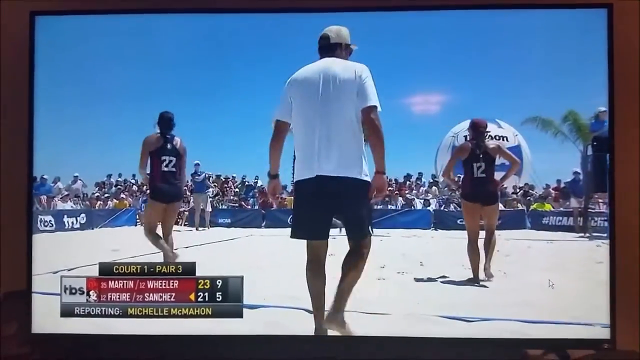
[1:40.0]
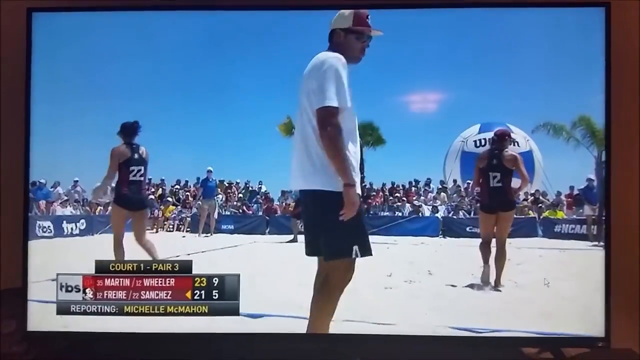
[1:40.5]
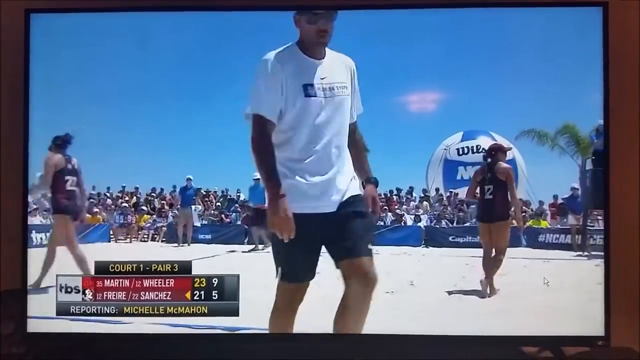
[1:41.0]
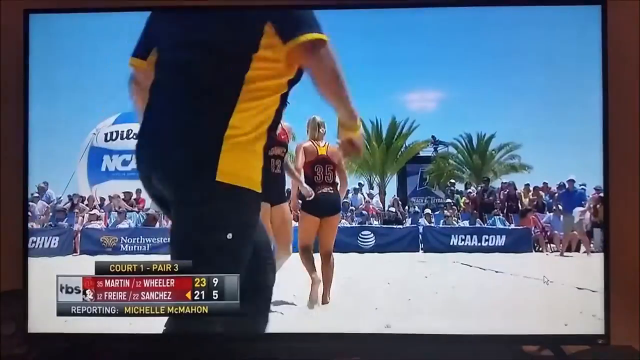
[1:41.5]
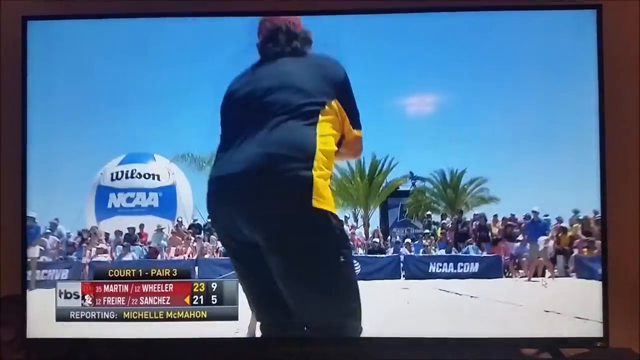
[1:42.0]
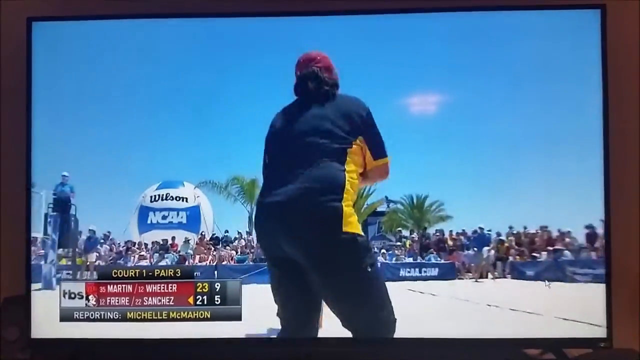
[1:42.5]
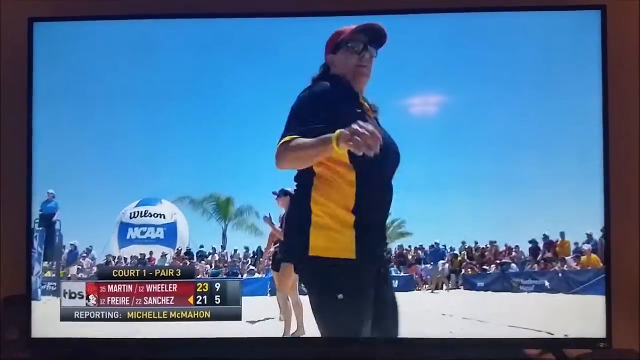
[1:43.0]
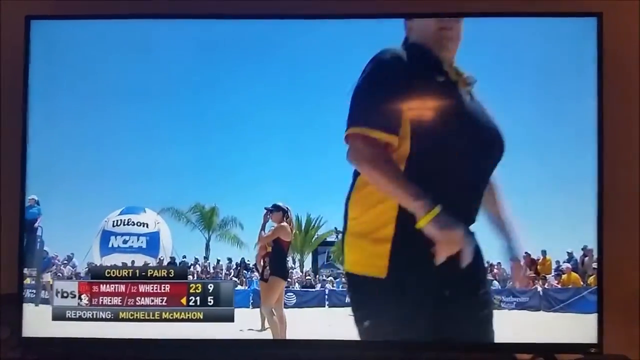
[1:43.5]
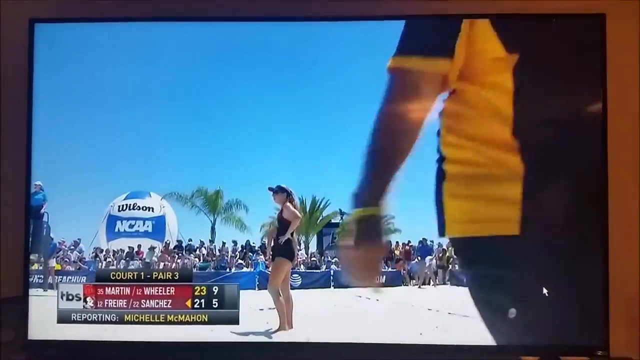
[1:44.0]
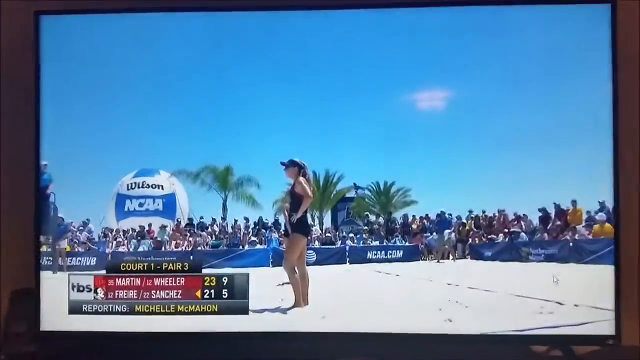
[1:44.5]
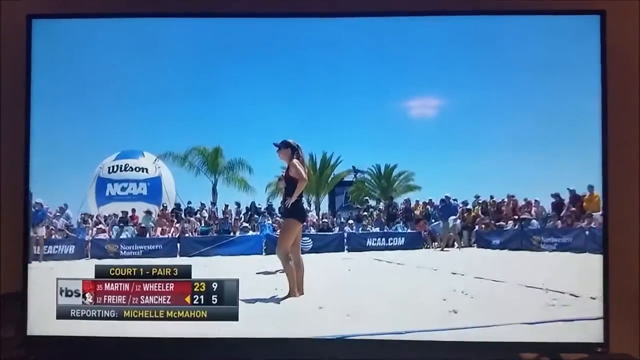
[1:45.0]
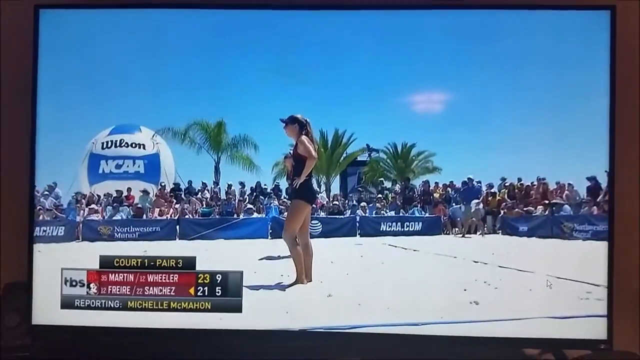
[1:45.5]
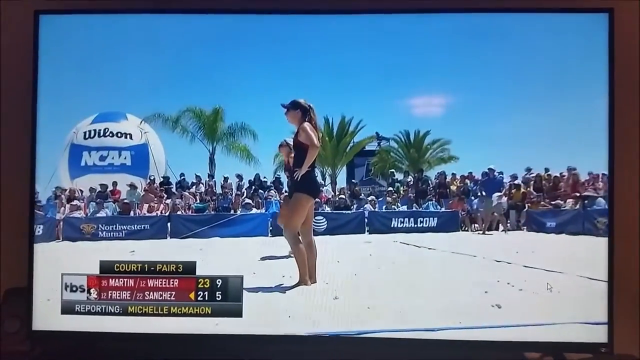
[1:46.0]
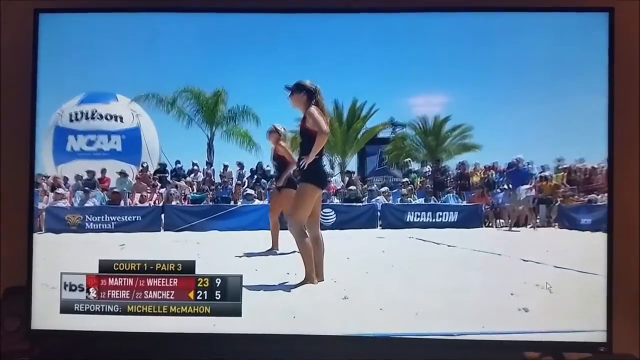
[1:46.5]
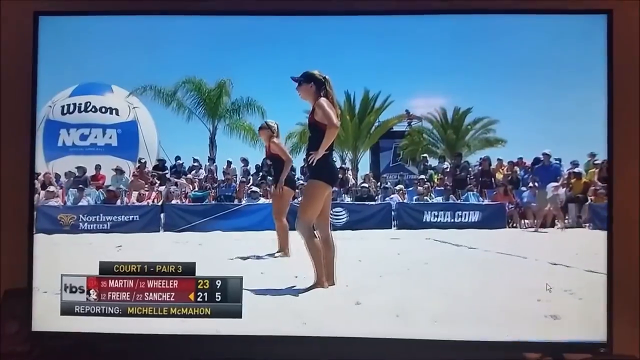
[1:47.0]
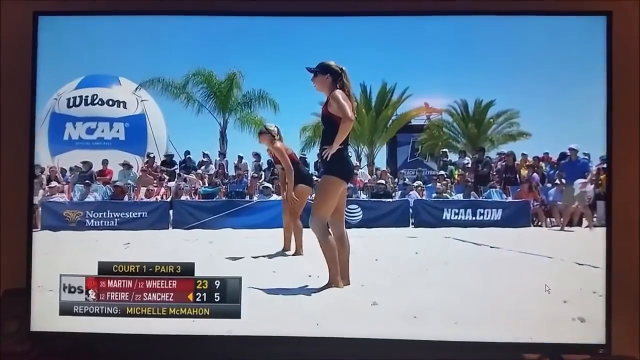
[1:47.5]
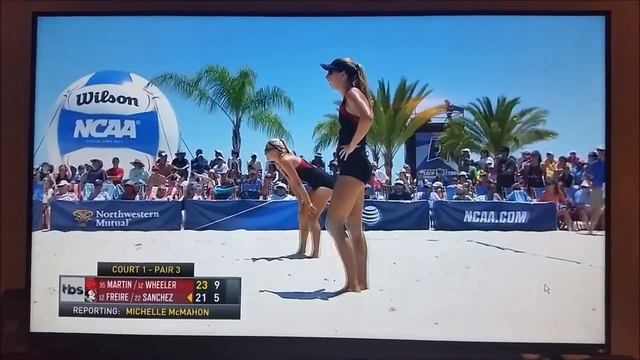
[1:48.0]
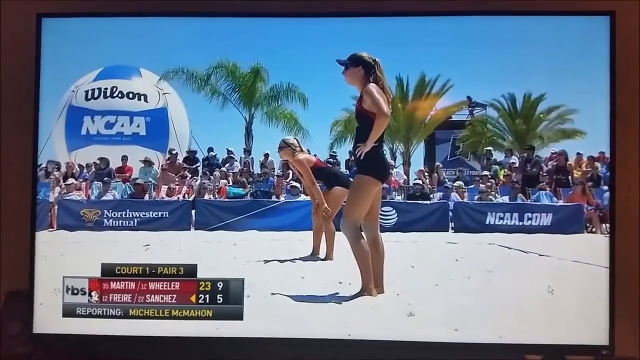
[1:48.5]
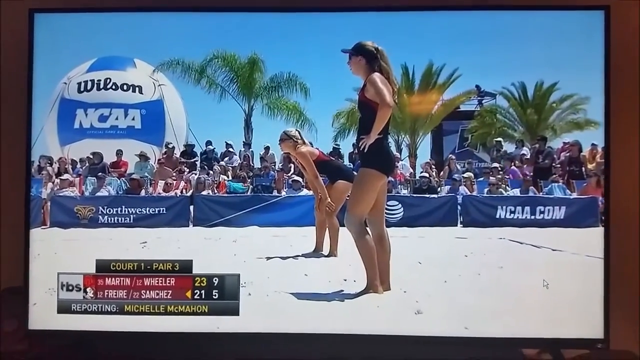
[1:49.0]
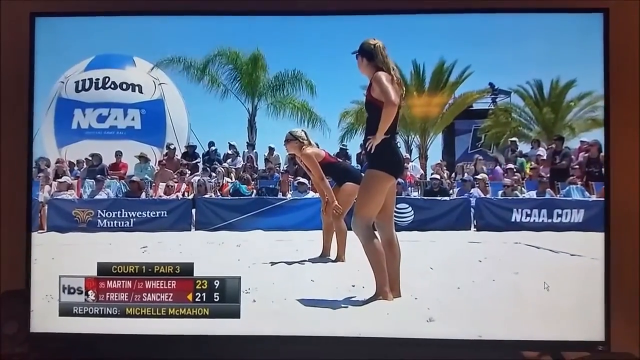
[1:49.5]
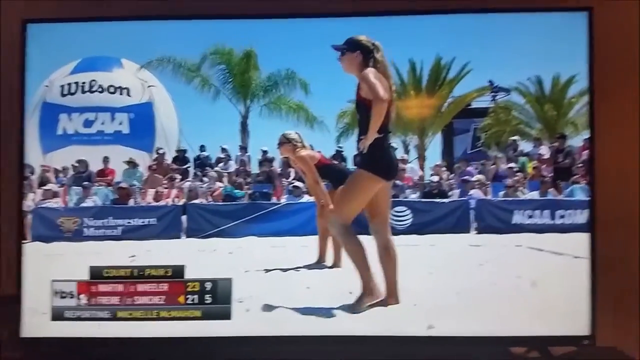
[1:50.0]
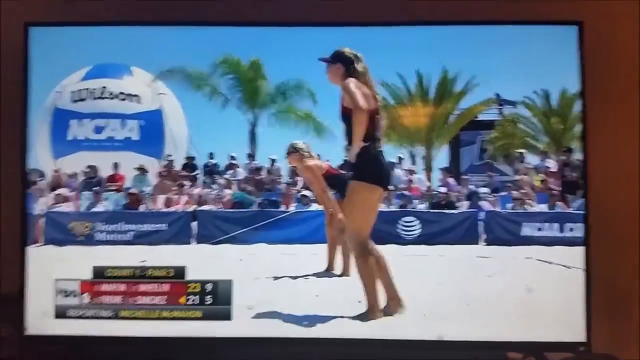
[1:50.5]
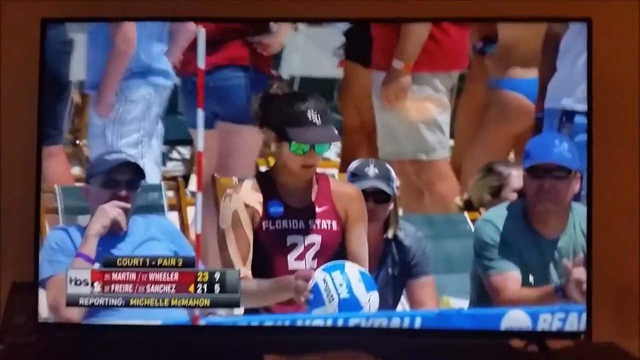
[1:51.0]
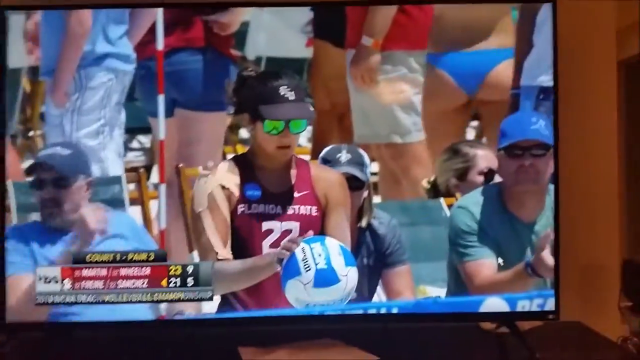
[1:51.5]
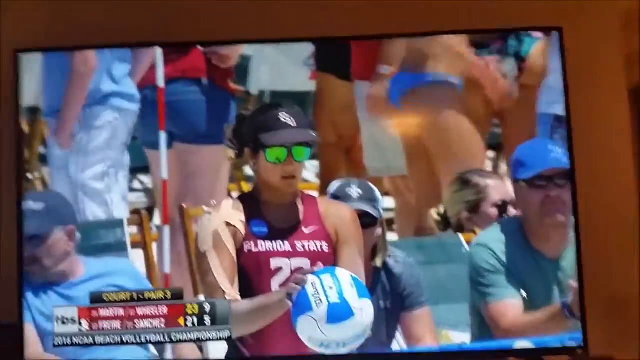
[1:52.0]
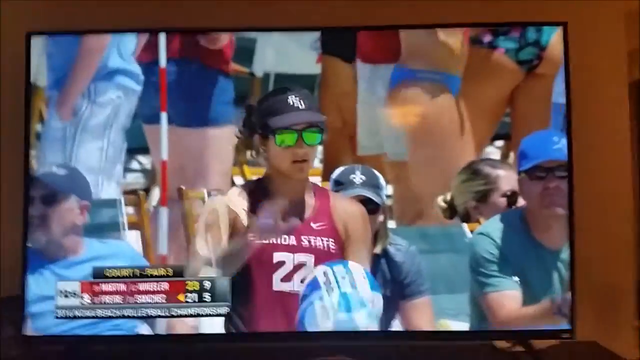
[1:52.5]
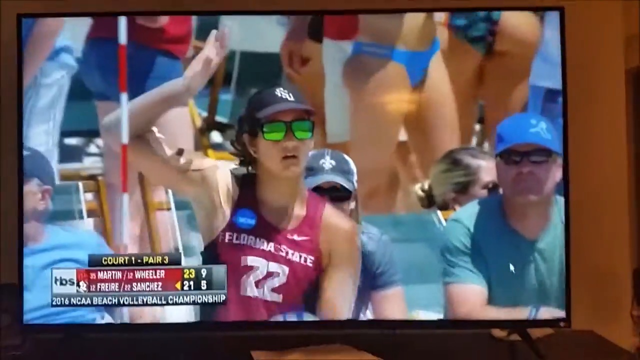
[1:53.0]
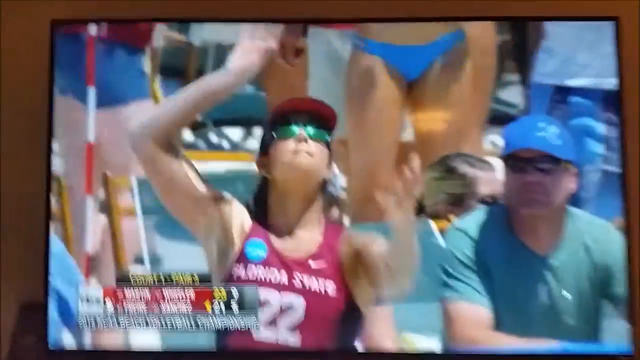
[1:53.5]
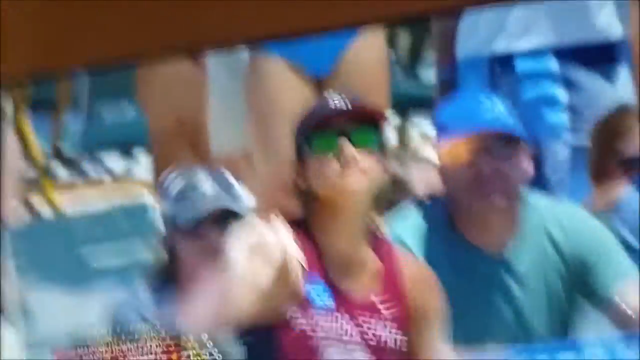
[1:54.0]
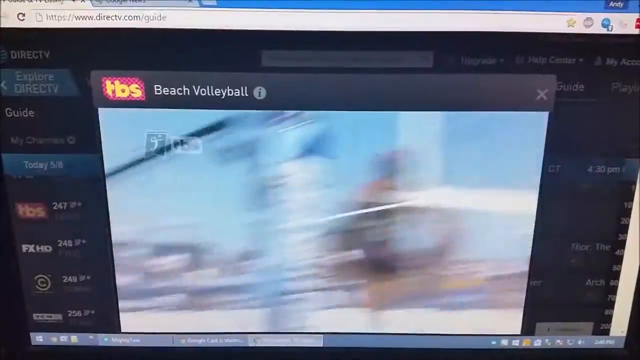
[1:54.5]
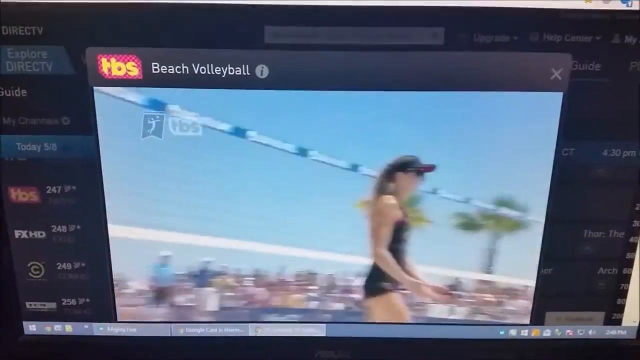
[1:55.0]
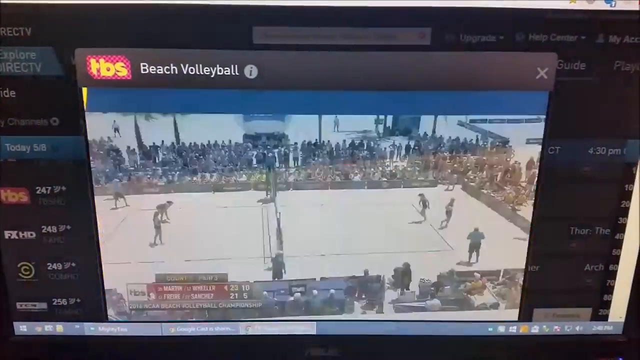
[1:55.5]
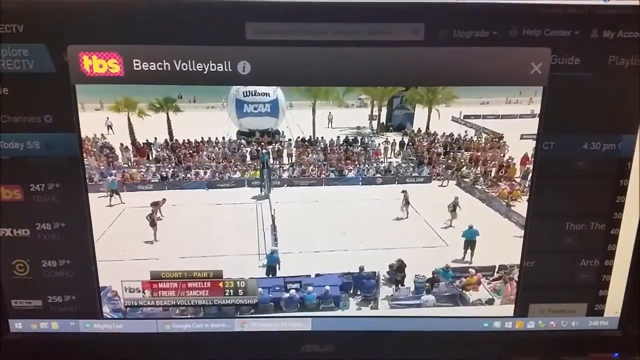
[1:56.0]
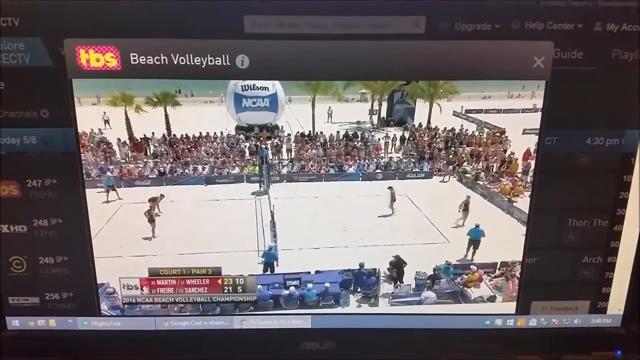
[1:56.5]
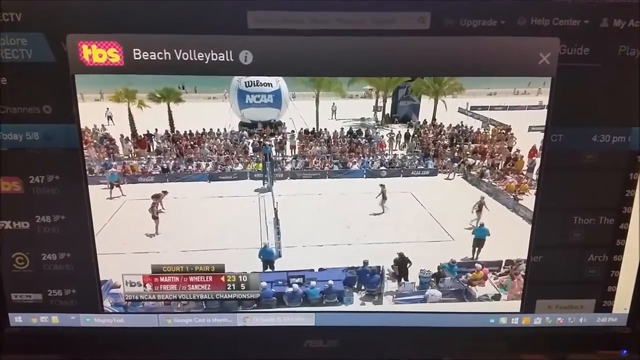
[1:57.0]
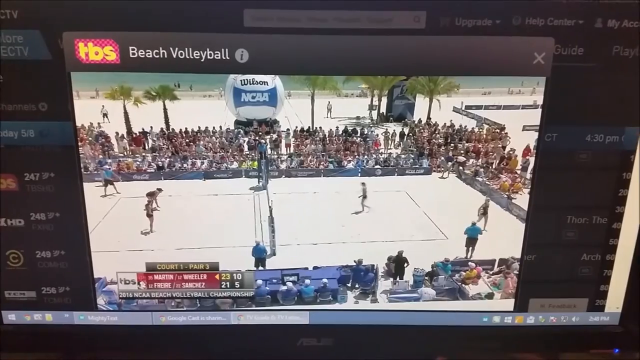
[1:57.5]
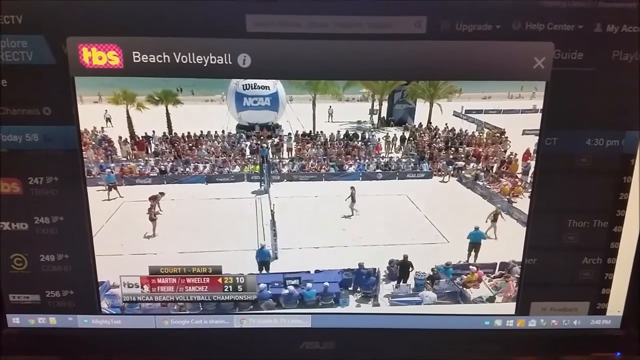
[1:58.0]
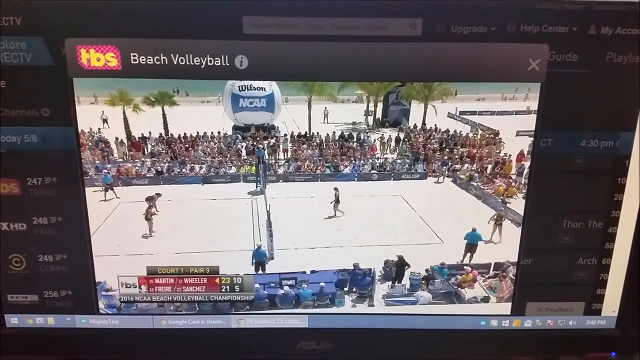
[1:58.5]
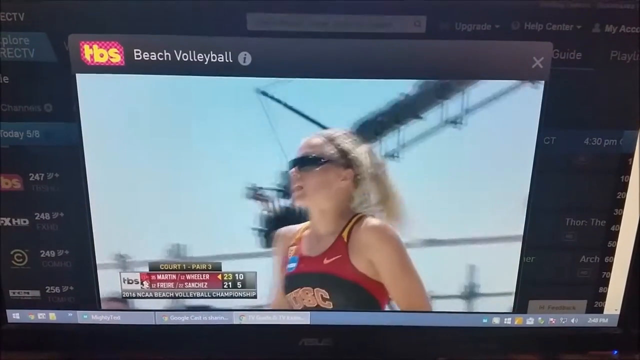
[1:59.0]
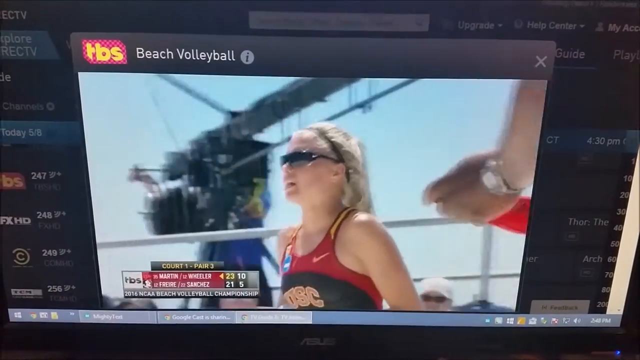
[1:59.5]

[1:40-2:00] Beach volleyball players compete against each other, with various logos in the background, including Shrew TV, TBS and NCWA. Audience members in the background watch the match with keen interest. In the bottom left-hand corner of the screen, a card shows the names of the competing players, and there is a TBS logo at the bottom left. It is a bright day, with a clear blue sky and just one cloud.